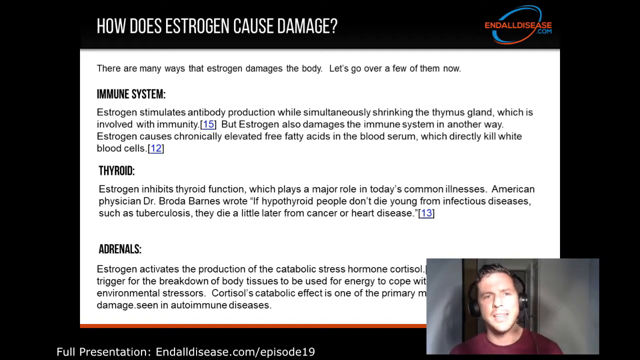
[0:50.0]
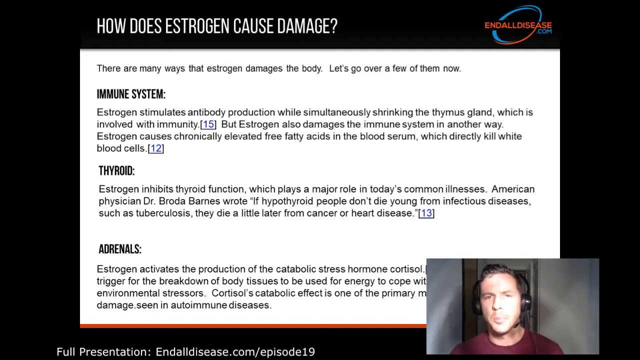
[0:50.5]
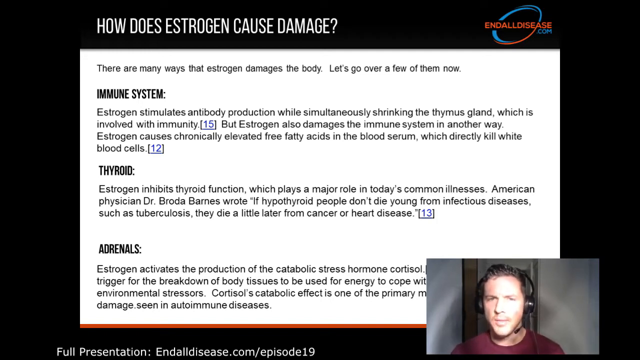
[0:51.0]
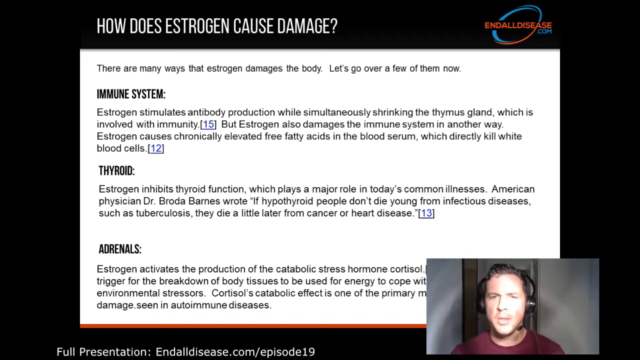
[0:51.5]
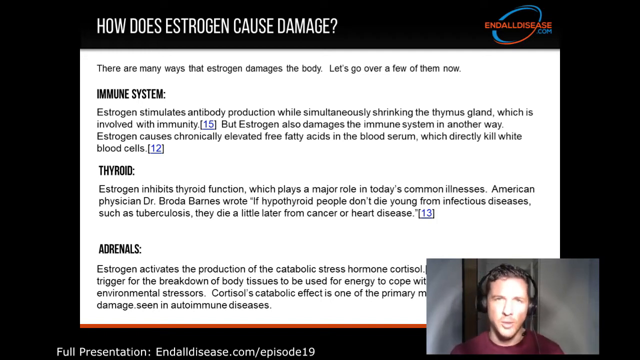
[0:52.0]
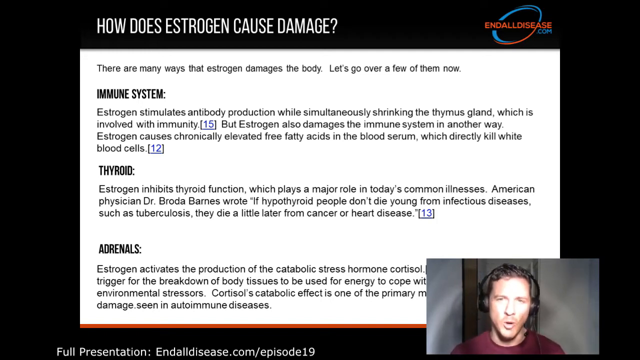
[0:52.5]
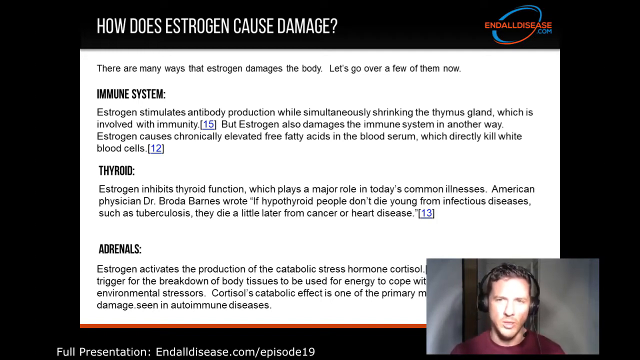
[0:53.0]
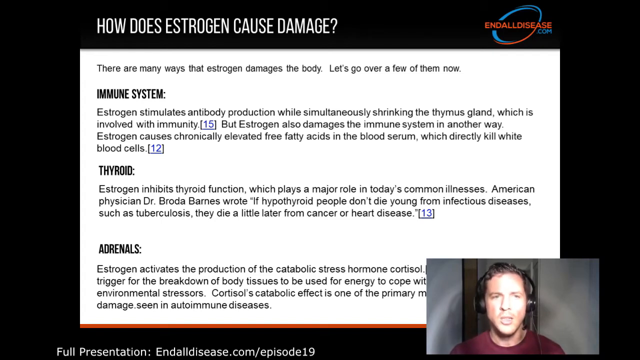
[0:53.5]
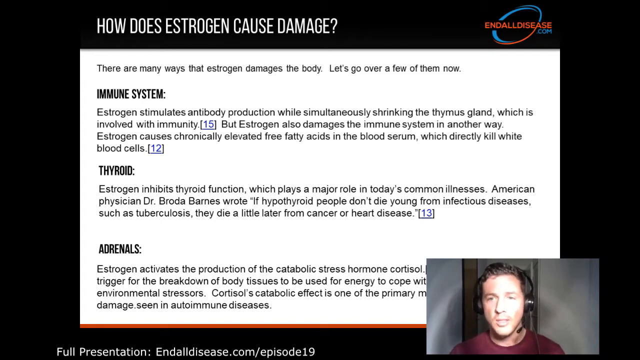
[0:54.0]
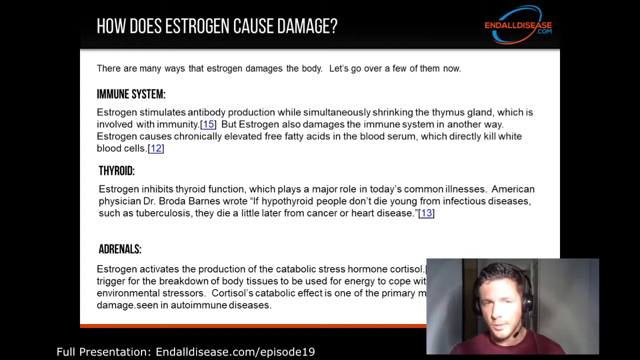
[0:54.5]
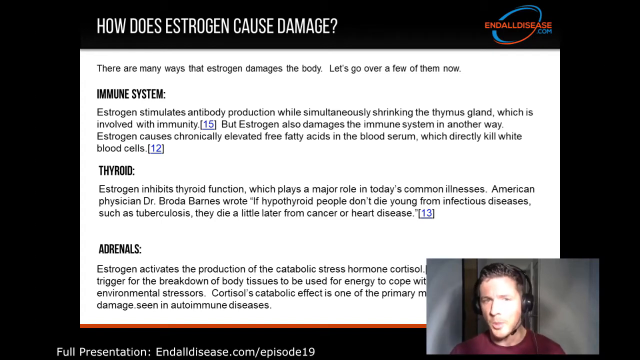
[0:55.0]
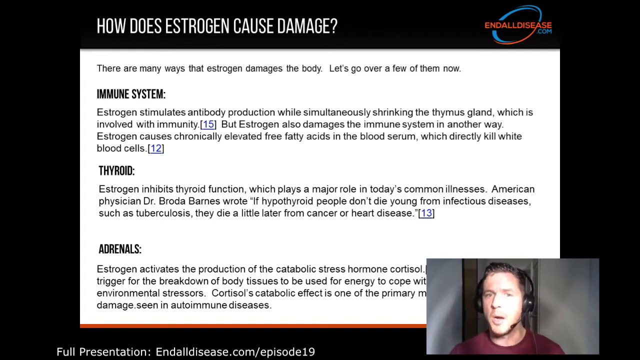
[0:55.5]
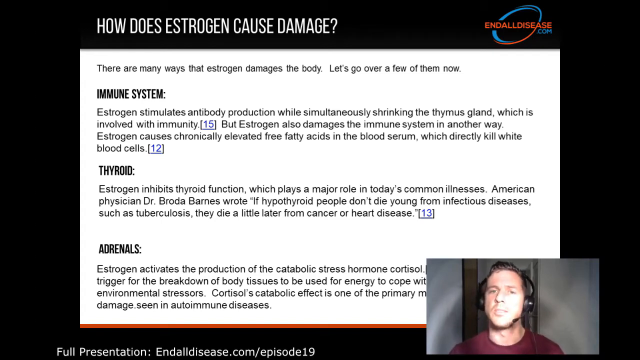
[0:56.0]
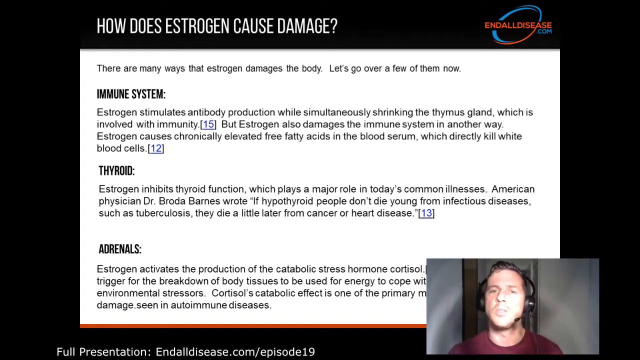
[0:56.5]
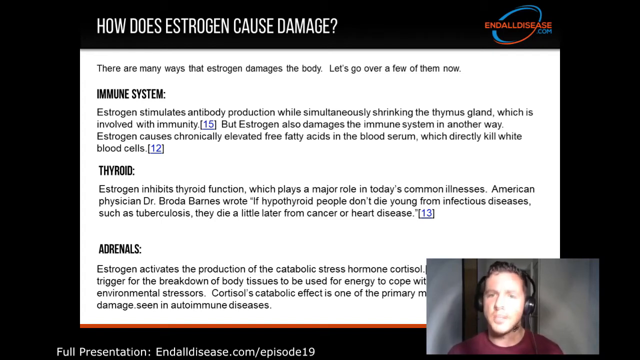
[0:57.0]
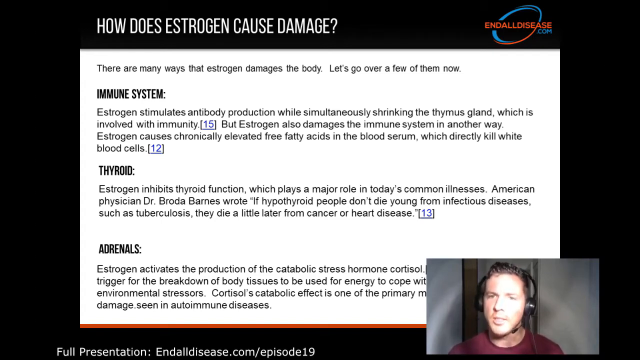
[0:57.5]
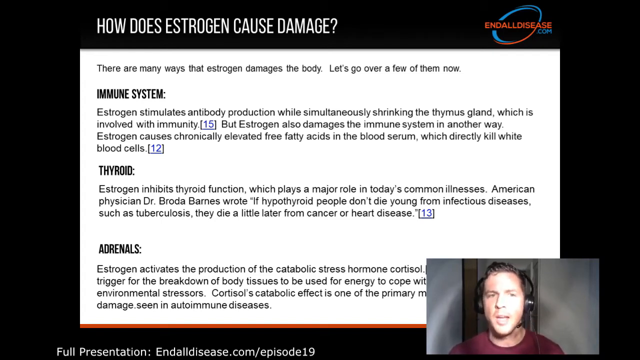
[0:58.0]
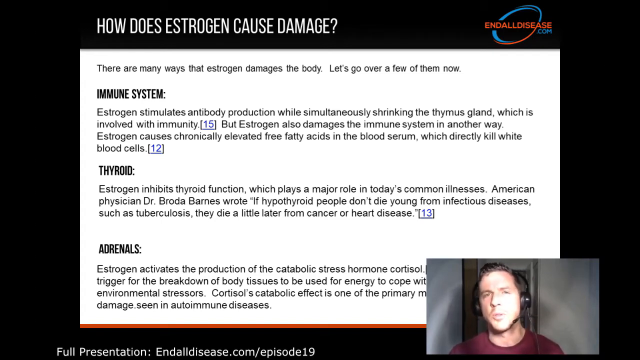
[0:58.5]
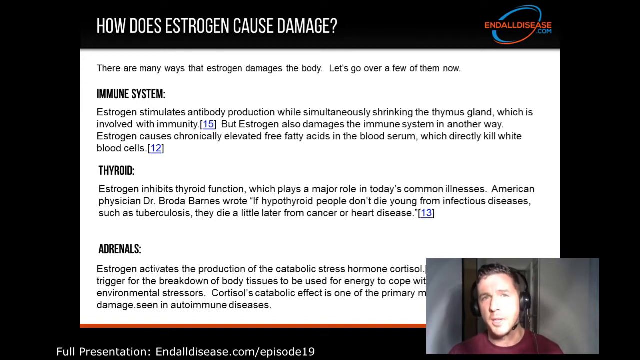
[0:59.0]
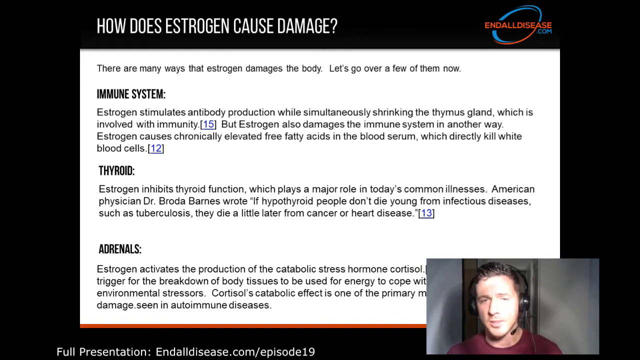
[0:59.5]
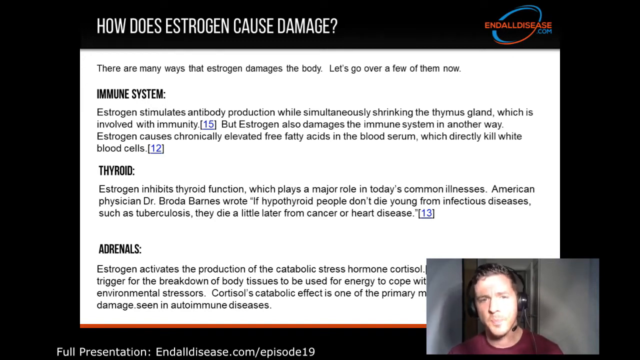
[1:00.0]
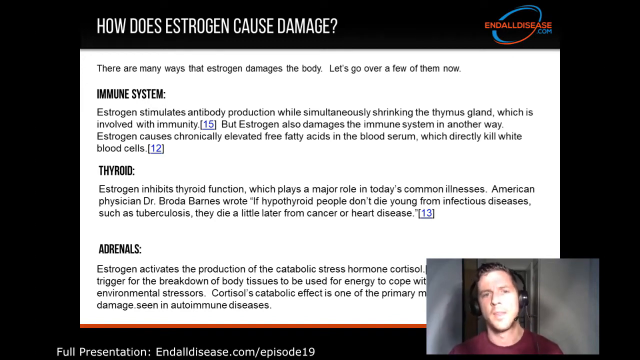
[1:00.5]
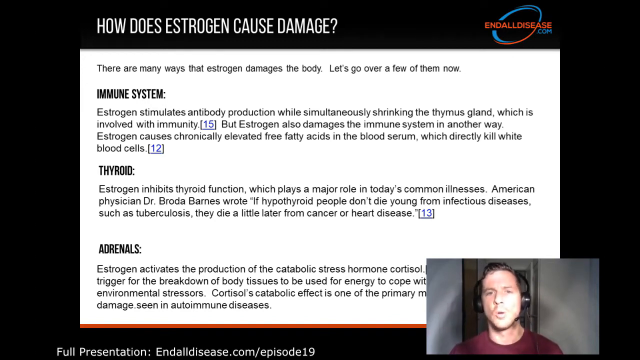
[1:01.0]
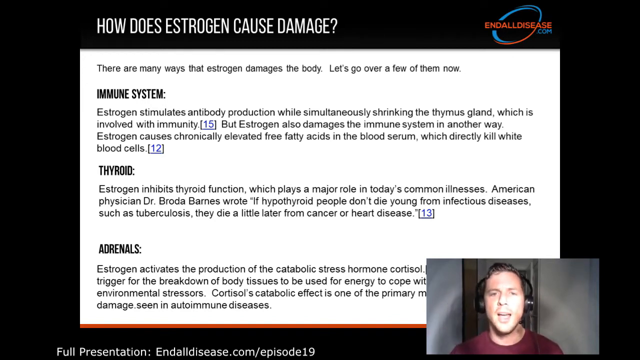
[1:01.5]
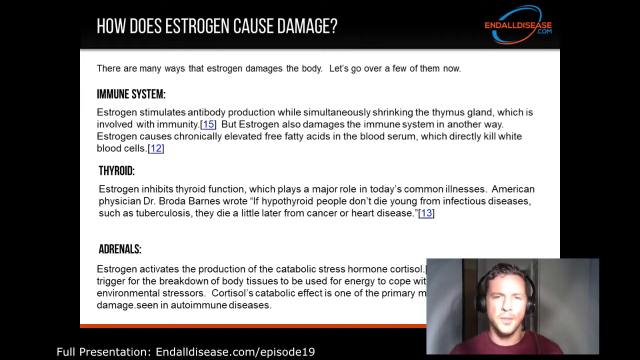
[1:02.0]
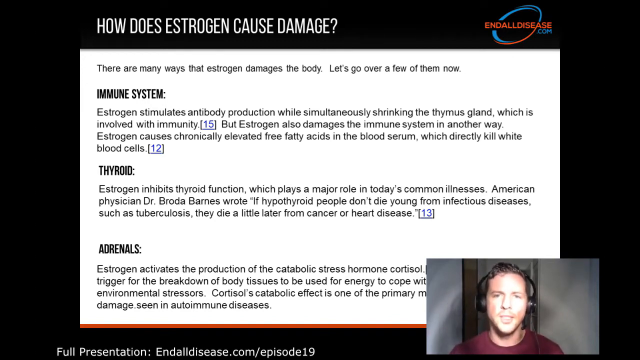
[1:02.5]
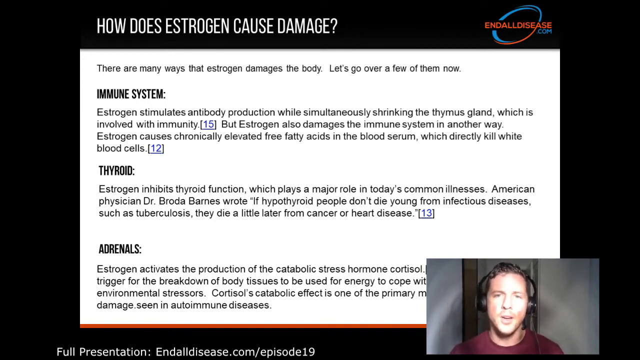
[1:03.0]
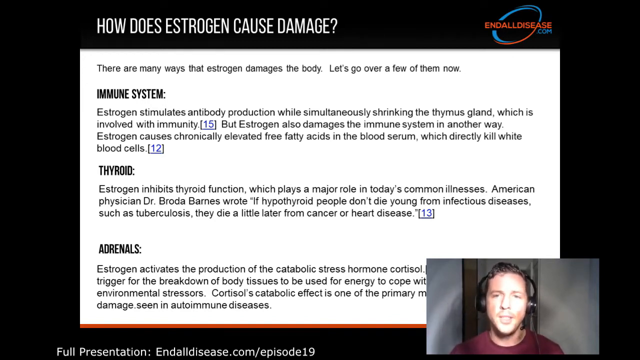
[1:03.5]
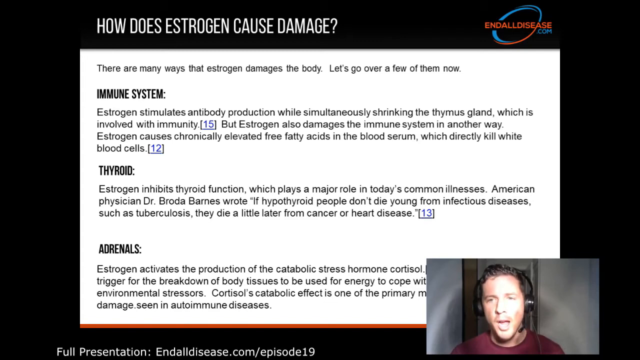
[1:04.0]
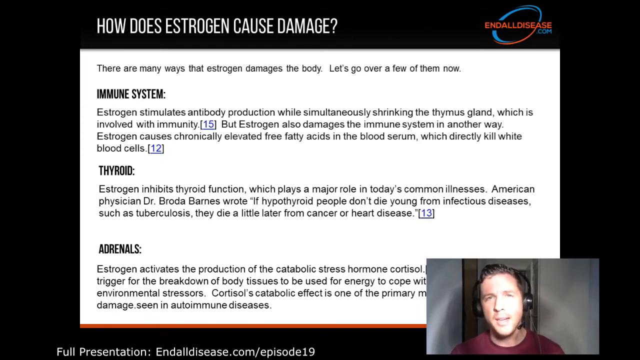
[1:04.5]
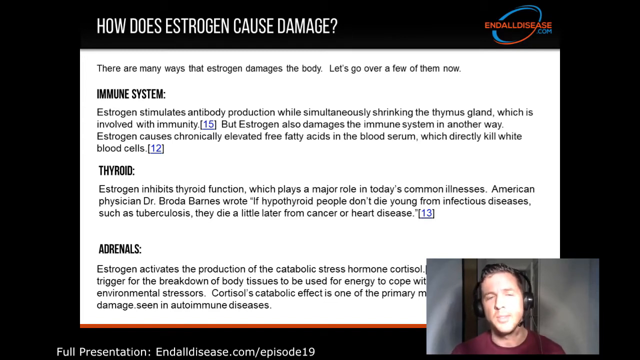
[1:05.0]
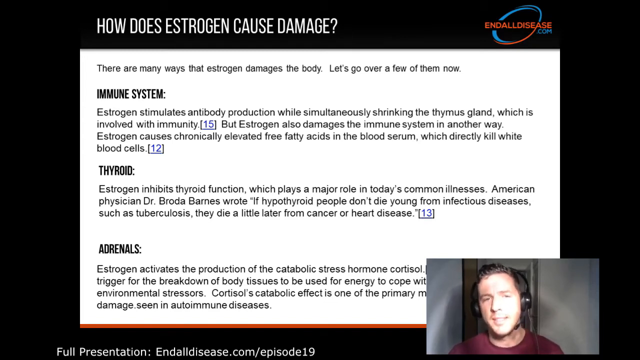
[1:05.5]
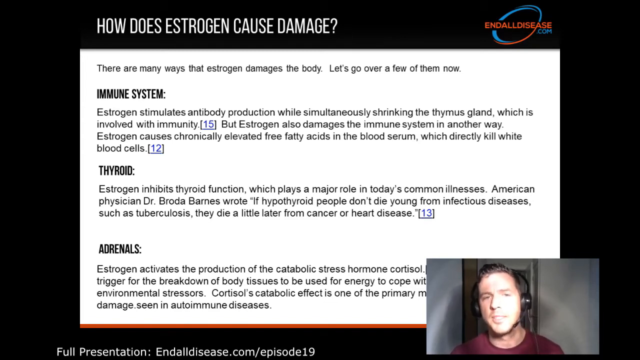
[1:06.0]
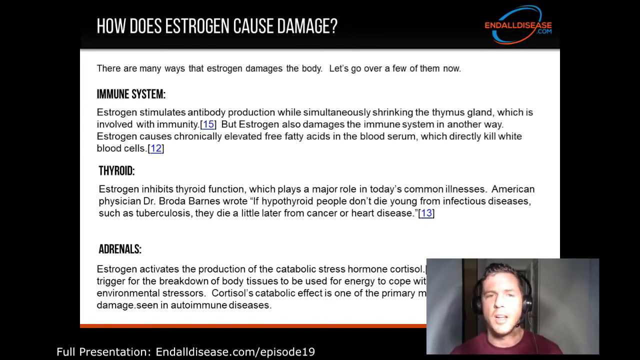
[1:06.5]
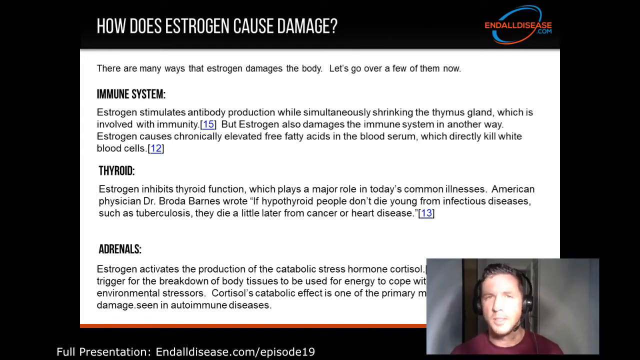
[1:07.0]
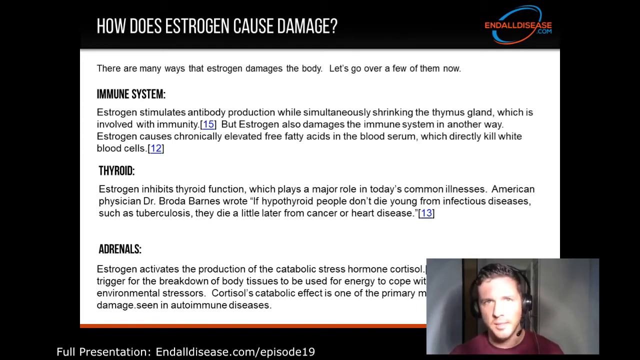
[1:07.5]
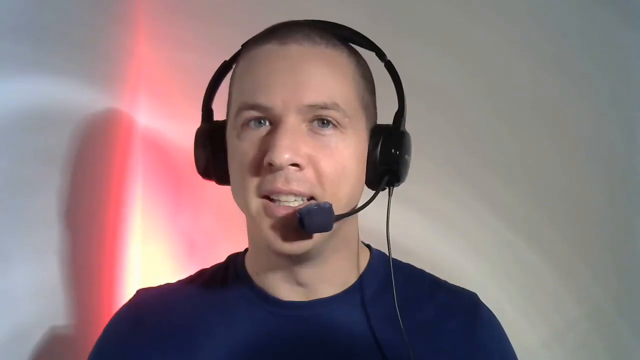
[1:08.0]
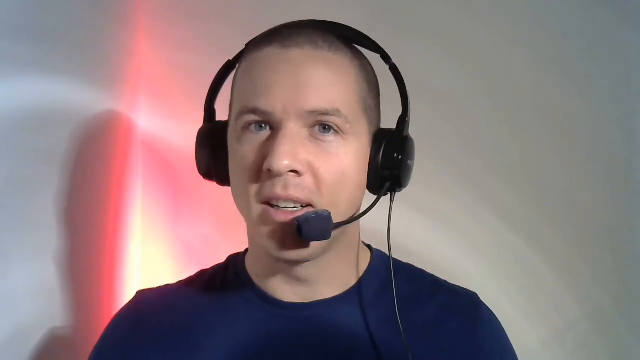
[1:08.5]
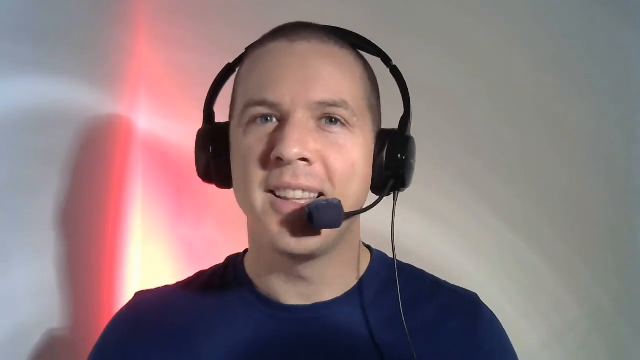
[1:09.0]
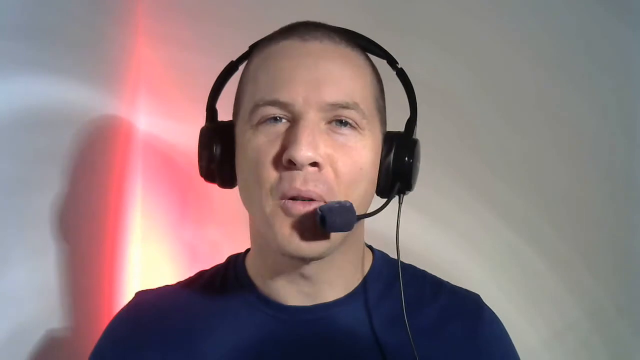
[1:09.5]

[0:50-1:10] A white text box has a black border, and in the border a header reads "How Does Estrogen Cause Damage?" with a logo for ENDALLDISEASE.com next to it. The white text box contains three headers, each explaining ways estrogen can damage the body: first "Immune System," second "Thyroid," and third "Adrenals." Under Immune System, the text says that estrogen stimulates antibody production and also shrinks the thymus gland, among other things. Under Thyroid, it says that estrogen inhibits thyroid function, which plays a major role in common illnesses. Below Adrenals, it says, among other things, that estrogen activates the production of the catabolic stress hormone cortisol. In a small video box in the lower right of the screen, a man in a red shirt wearing headphones with a microphone attached speaks directly to the screen. At the very bottom, in the black border, text says "Full Presentation: Endalldisease.com/Episode 19." Briefly, at the end, all of this disappears from the screen and another man appears, sitting in a room with a blurred backdrop. He also wears headphones with a microphone, and his face fills the entire screen.